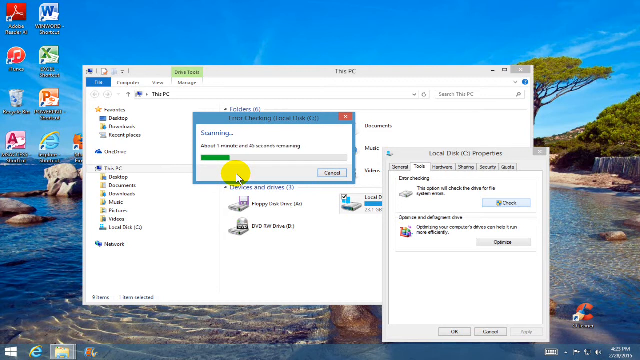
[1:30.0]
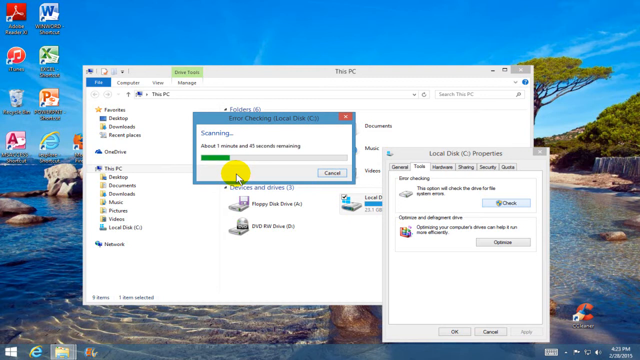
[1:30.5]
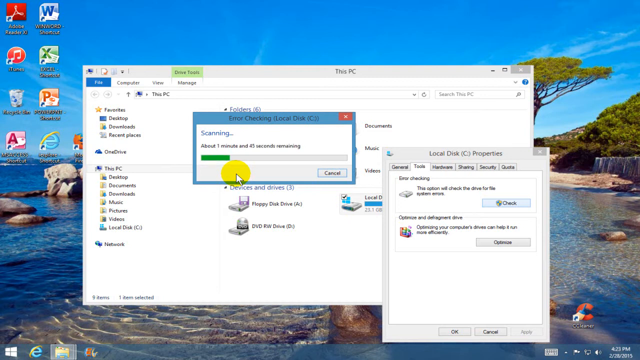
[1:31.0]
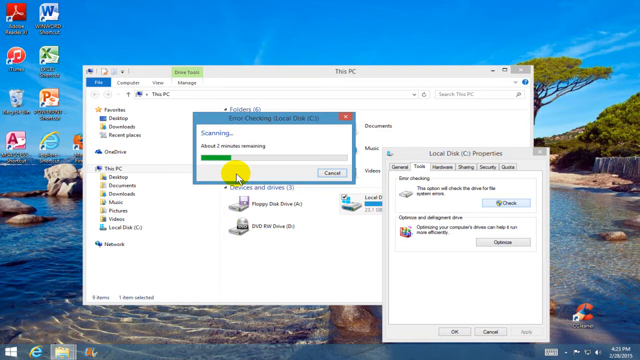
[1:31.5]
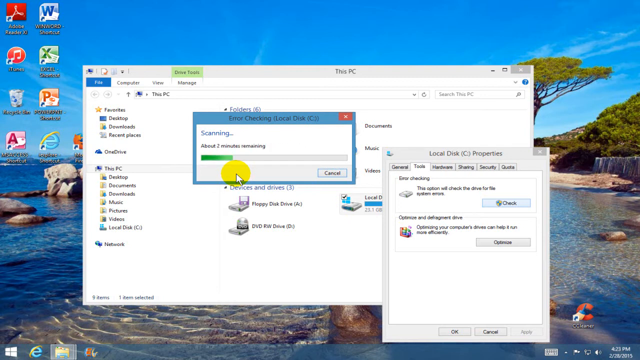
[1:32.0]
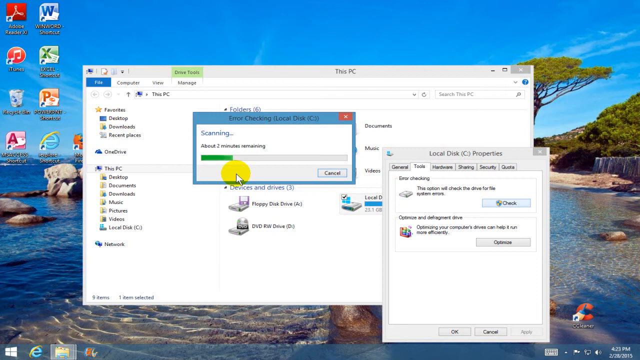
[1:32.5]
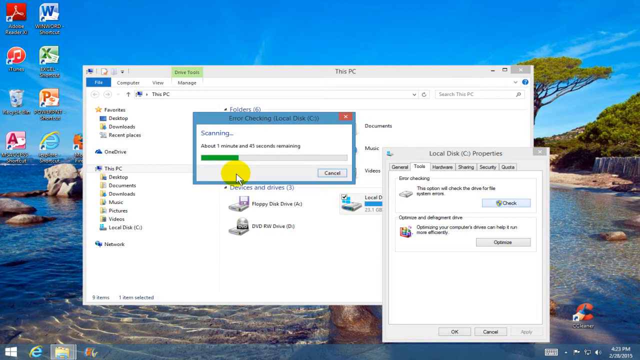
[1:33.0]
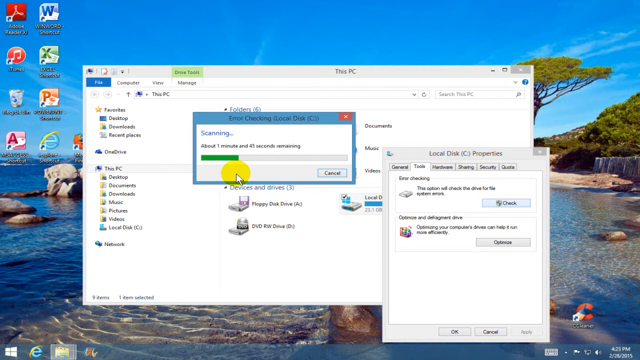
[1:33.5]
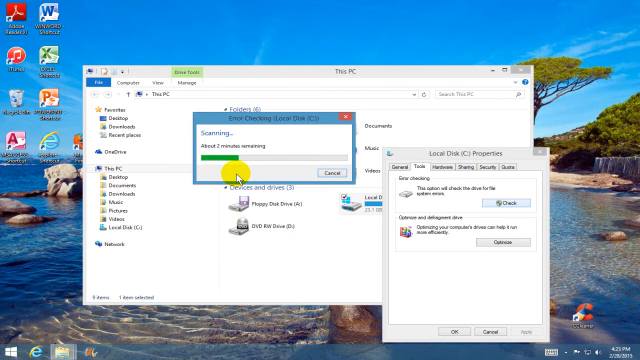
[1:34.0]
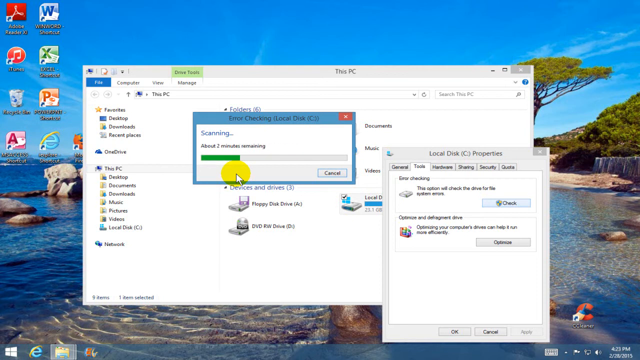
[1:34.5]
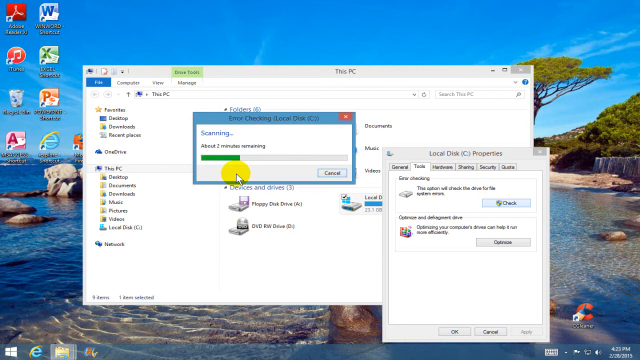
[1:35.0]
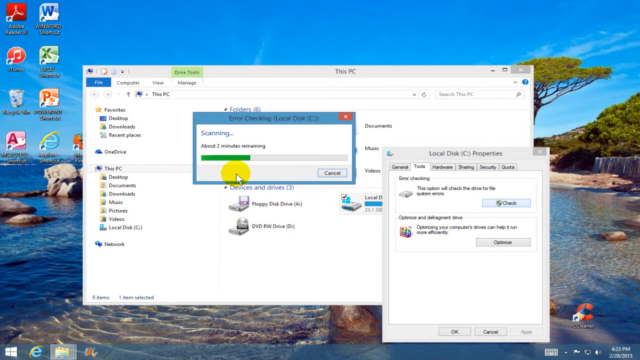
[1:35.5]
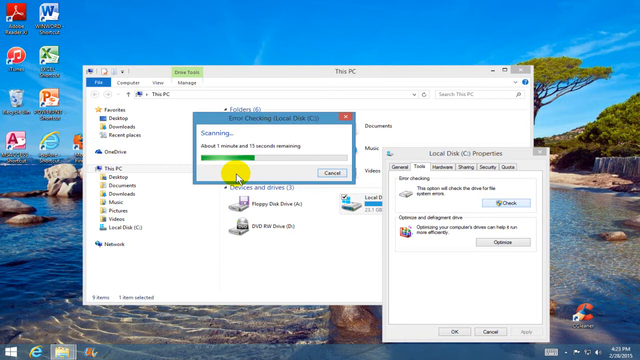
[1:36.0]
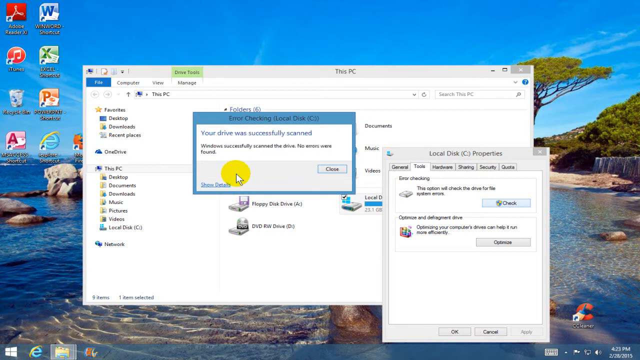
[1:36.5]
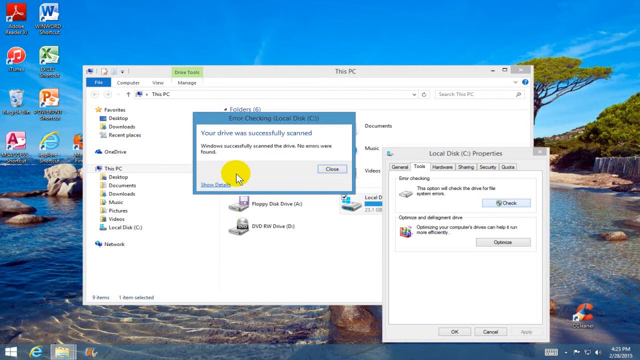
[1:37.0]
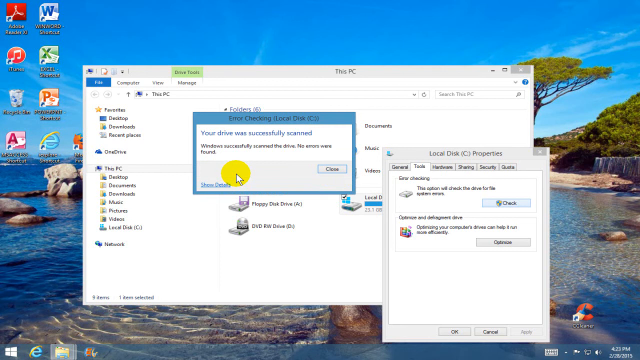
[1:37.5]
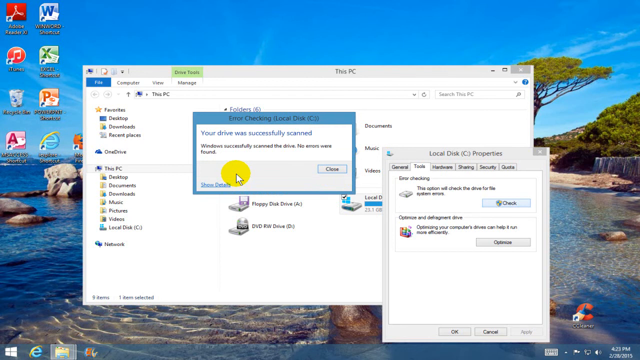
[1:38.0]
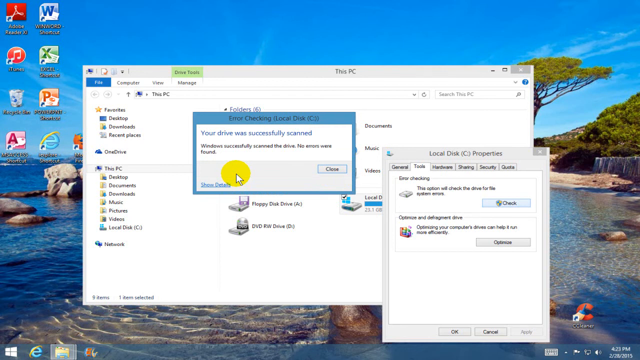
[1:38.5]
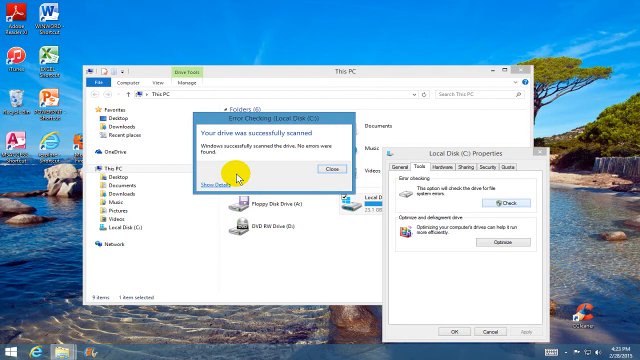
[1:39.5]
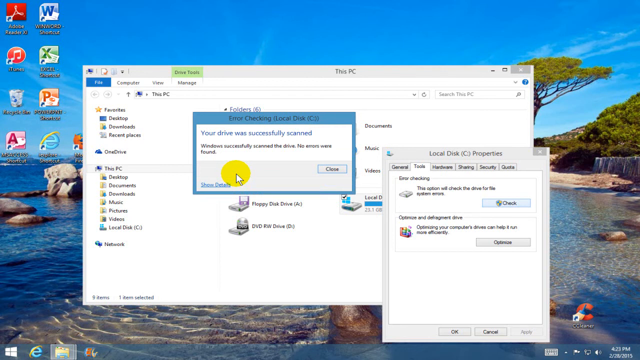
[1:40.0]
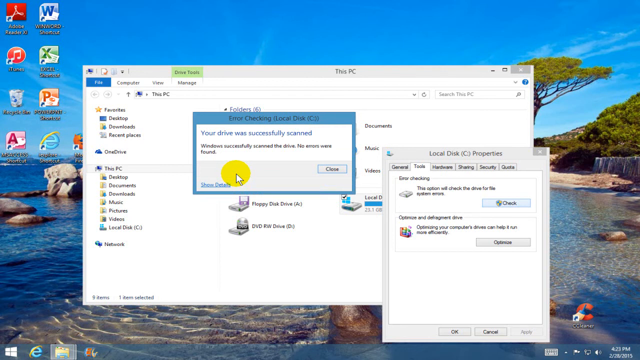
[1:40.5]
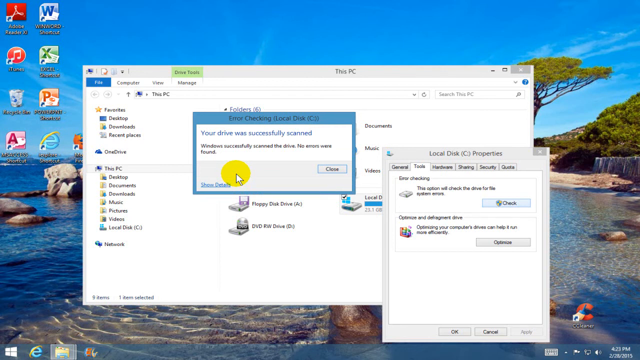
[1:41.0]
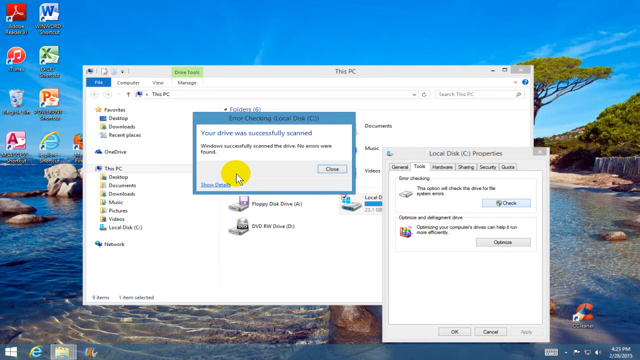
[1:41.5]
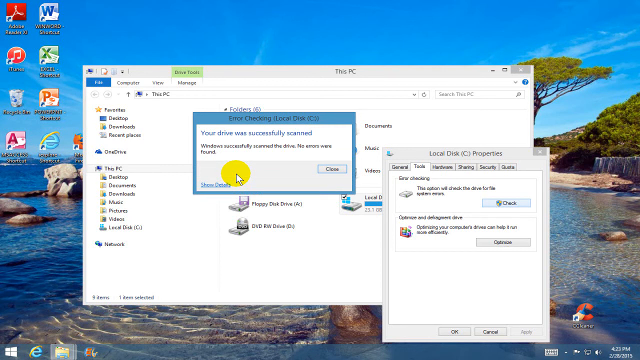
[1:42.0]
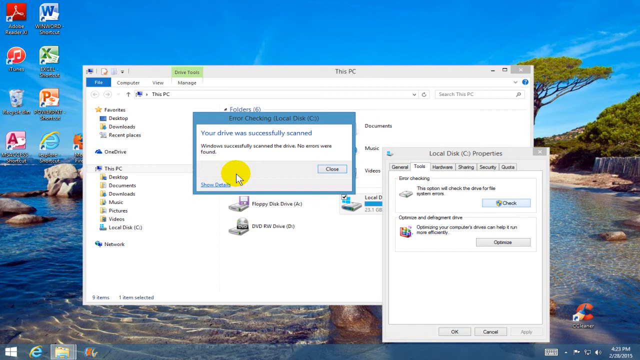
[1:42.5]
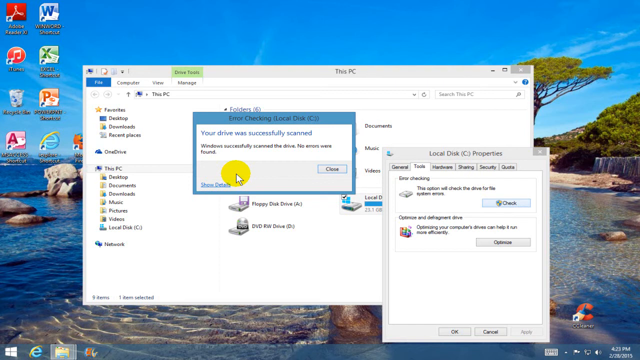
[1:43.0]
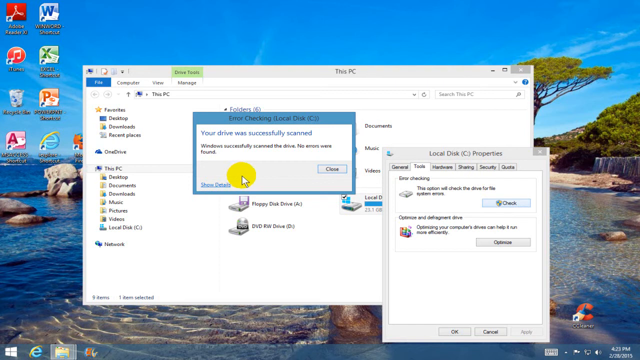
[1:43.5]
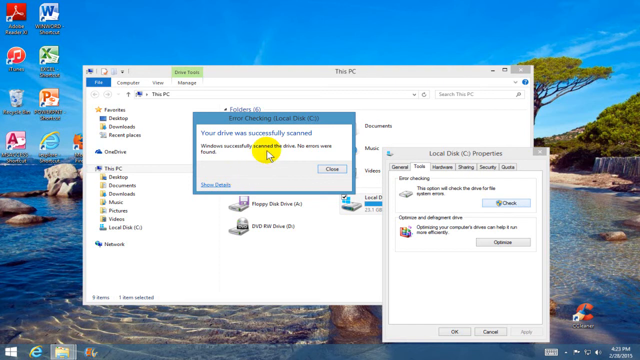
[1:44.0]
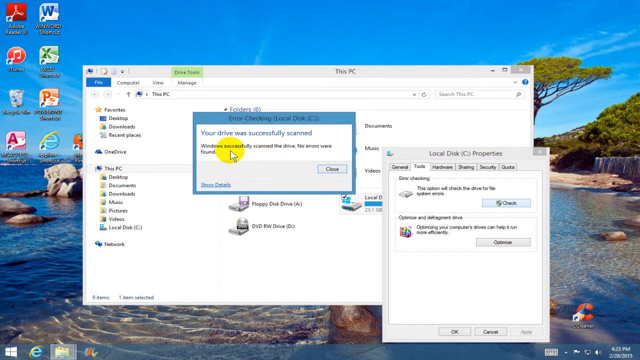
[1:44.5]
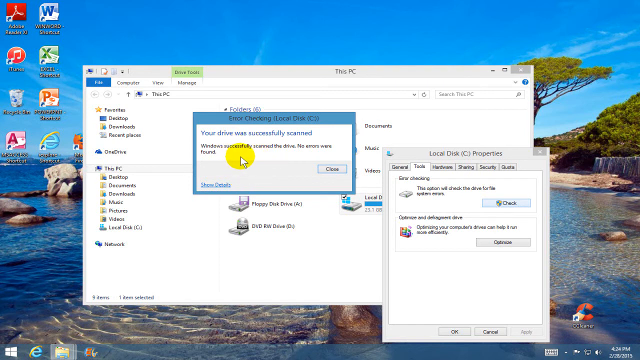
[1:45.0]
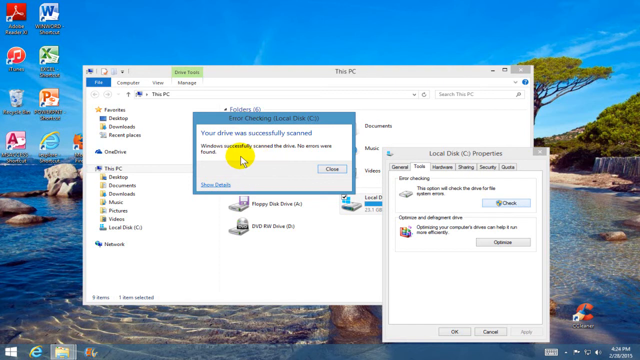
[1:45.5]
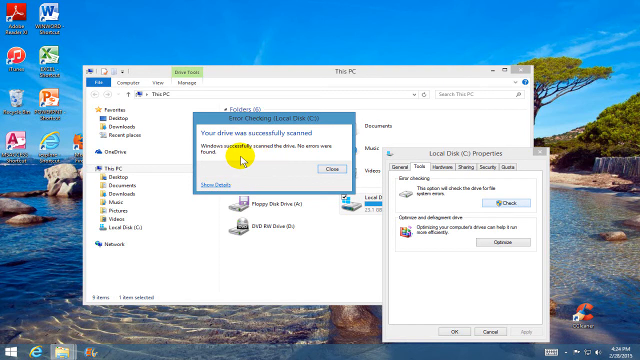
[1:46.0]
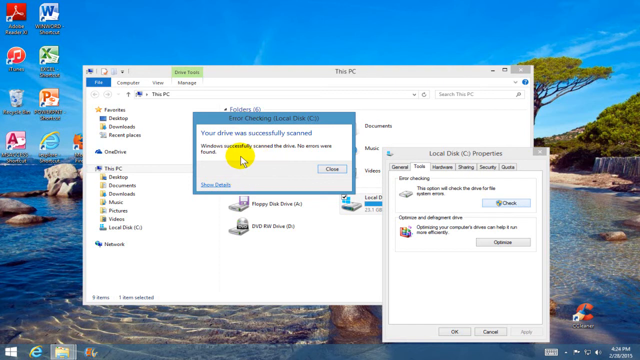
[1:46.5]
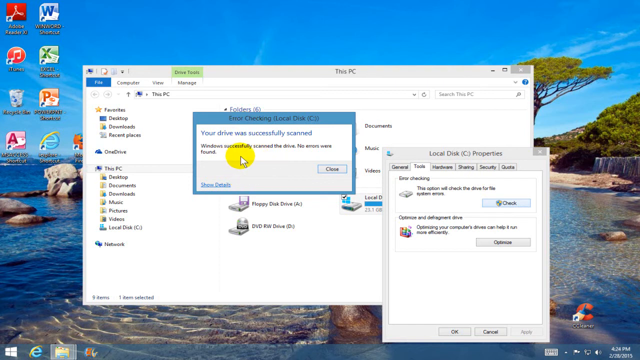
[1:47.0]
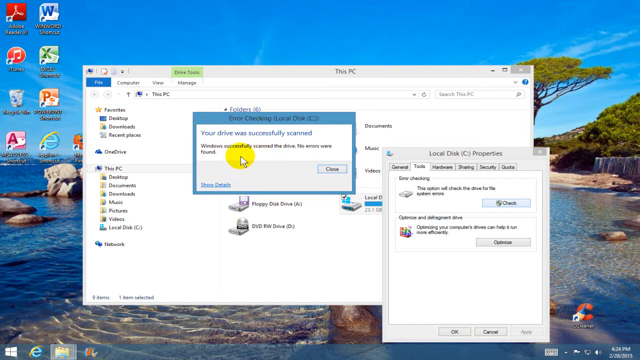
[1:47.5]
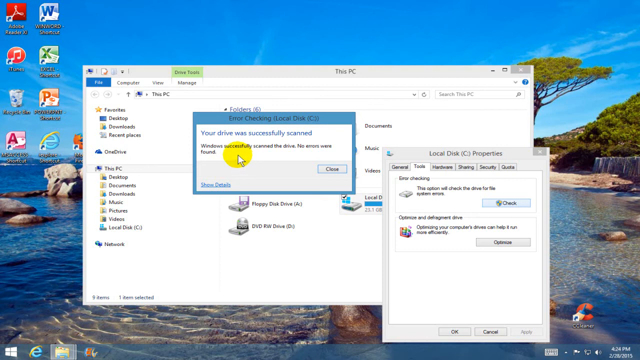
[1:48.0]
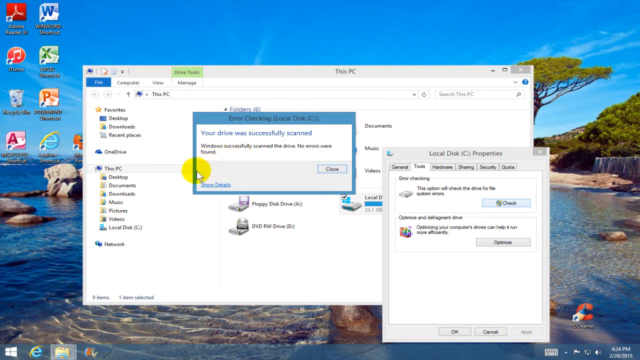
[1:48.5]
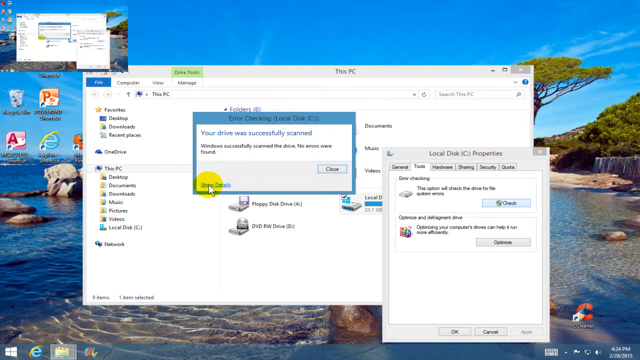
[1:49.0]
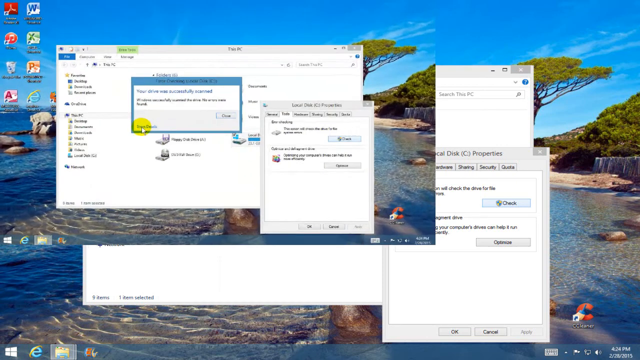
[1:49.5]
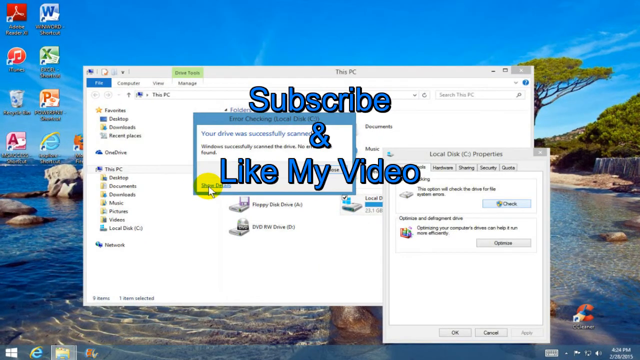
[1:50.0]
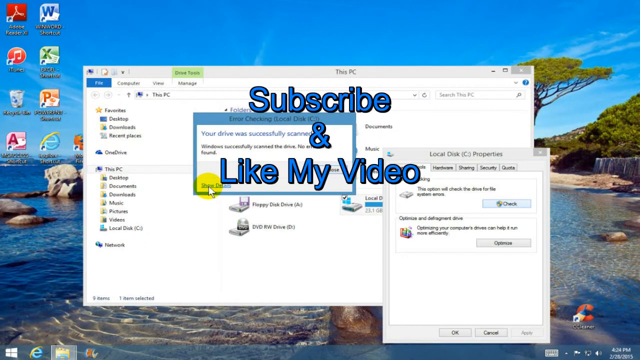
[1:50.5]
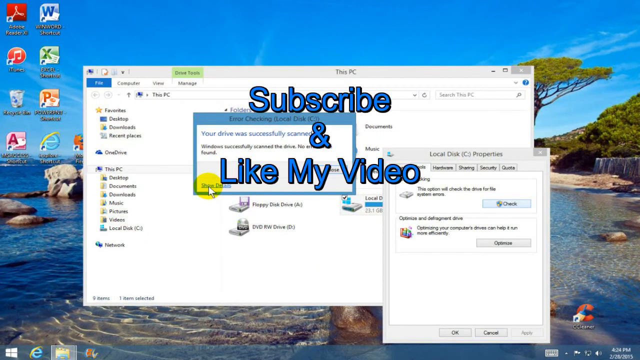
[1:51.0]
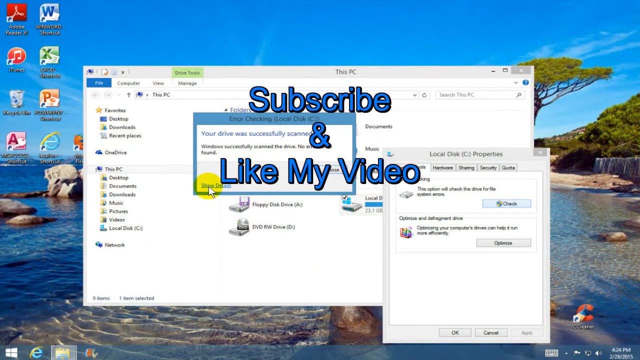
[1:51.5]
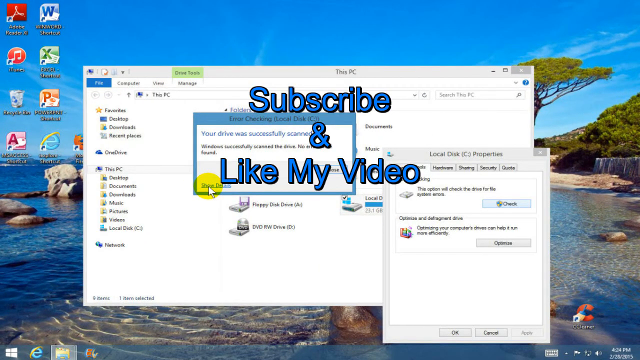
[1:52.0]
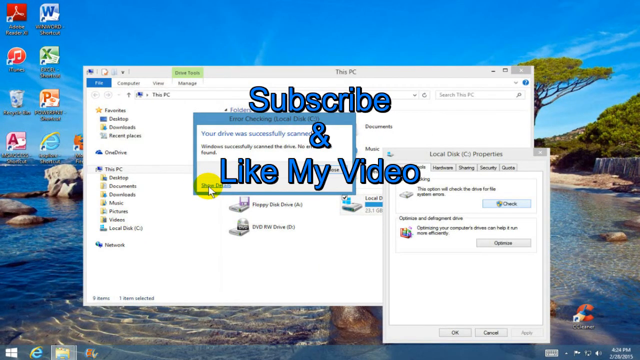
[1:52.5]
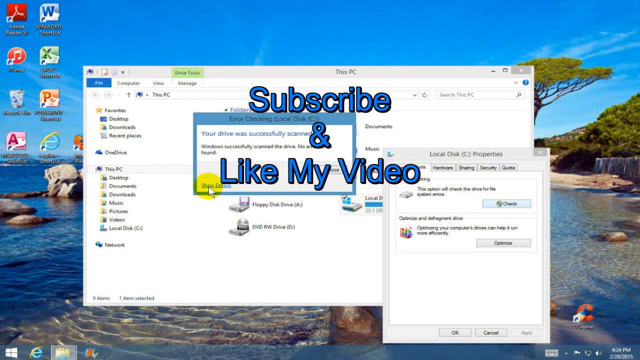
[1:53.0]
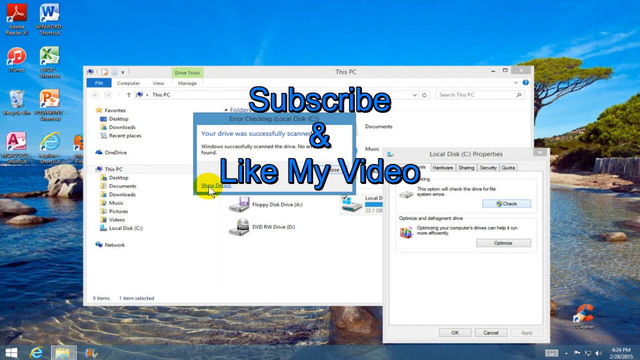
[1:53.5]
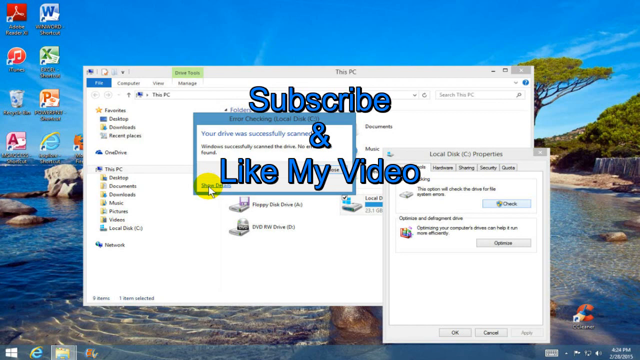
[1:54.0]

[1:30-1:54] The dialog box is shown while the error-checking scan of the drive runs. The time remaining goes up to over an hour, then, once scanning actually starts, drops very rapidly to under two minutes. The scan completes with the message "Your drive was successfully scanned. Windows successfully scanned the drive. No errors found." A text overlay then comes onto the screen reading "subscribe and like my video". In the background, the desktop wallpaper looks like a tropical beach with some large boulders in the shallow water, and to the left are shortcuts to different software programs on the computer.